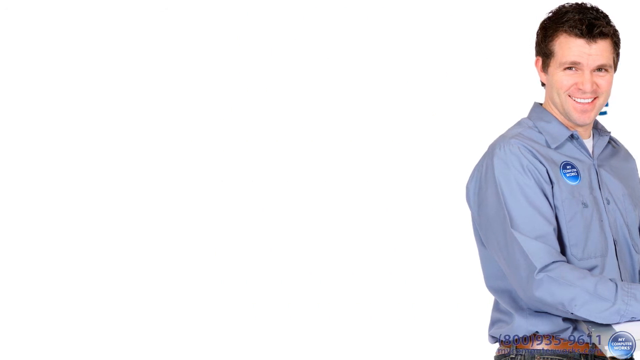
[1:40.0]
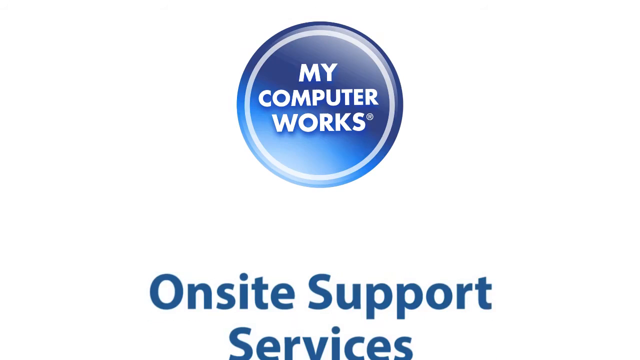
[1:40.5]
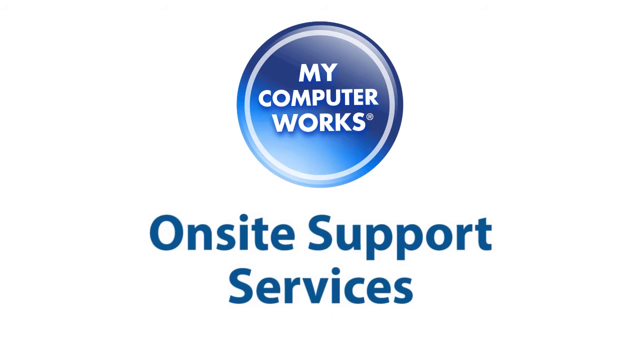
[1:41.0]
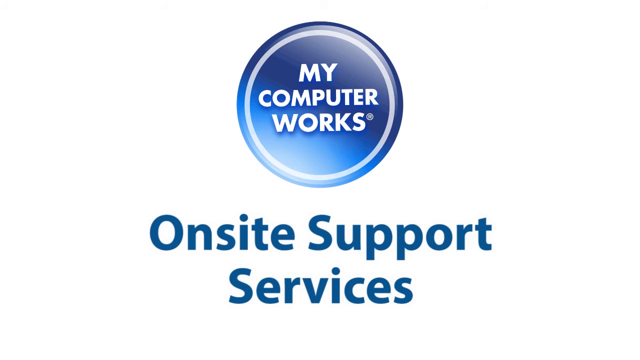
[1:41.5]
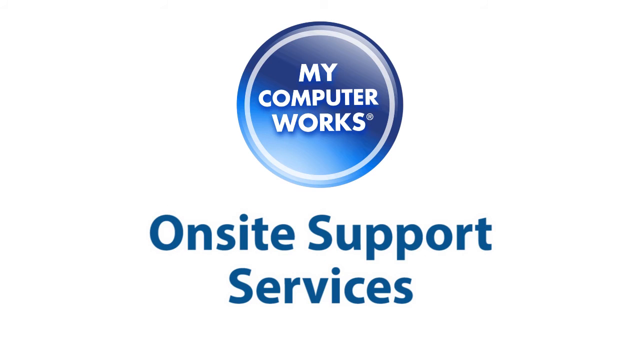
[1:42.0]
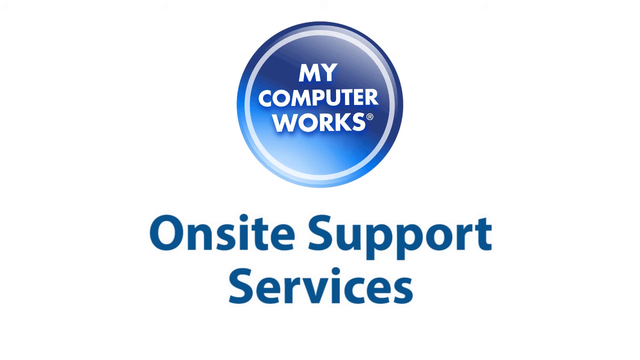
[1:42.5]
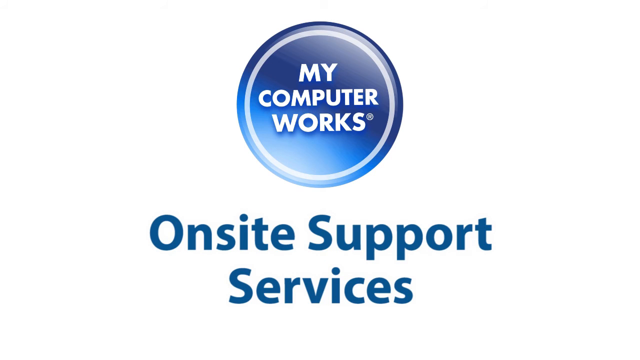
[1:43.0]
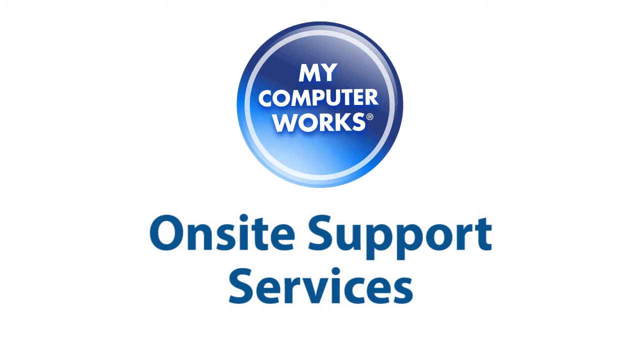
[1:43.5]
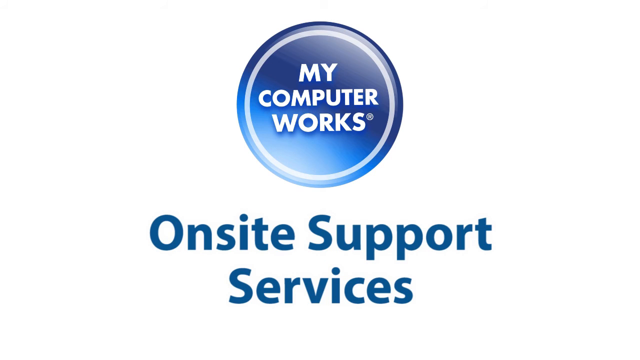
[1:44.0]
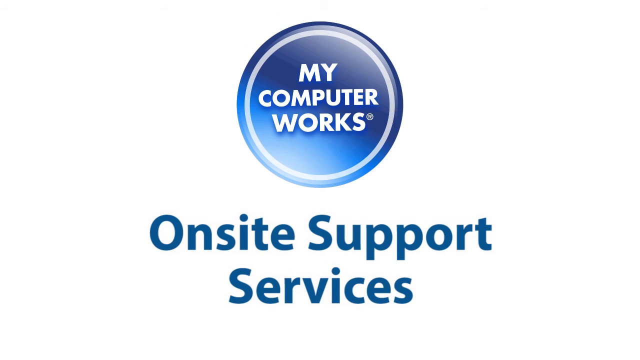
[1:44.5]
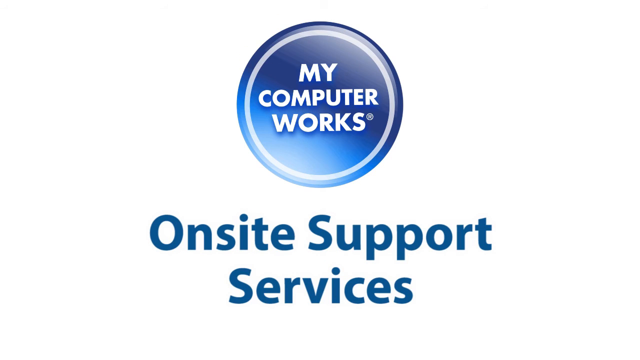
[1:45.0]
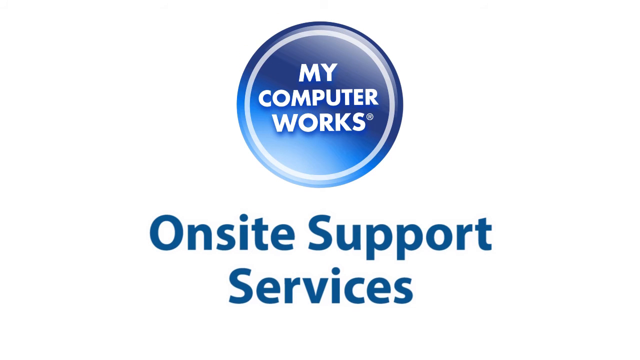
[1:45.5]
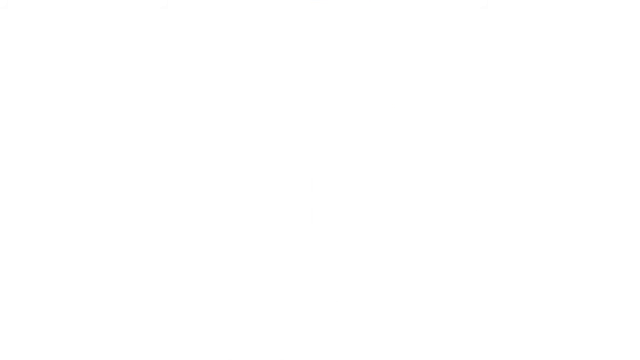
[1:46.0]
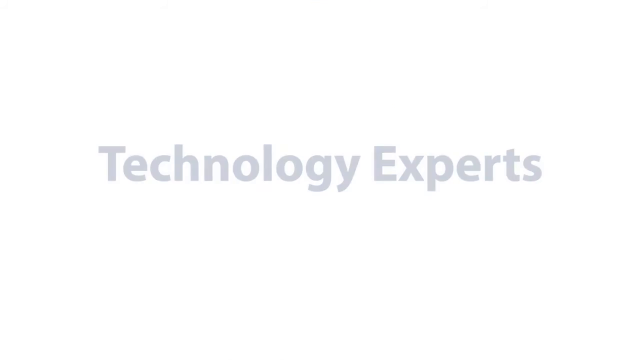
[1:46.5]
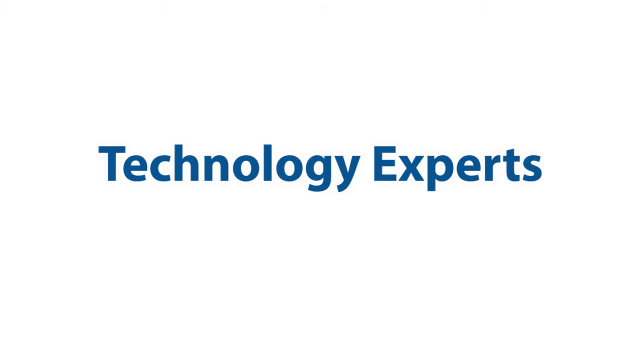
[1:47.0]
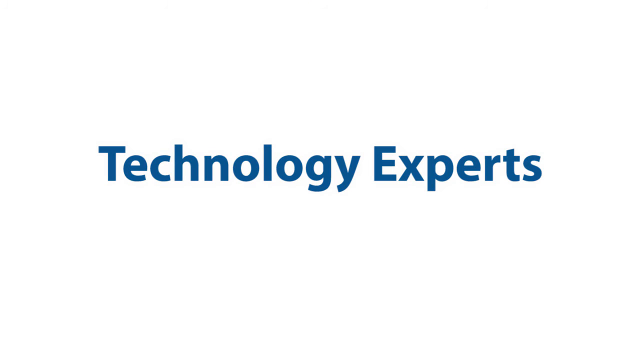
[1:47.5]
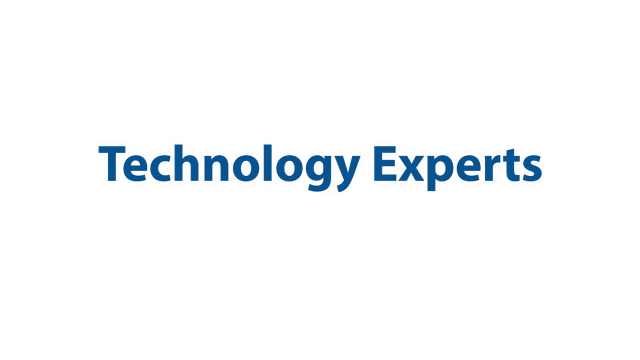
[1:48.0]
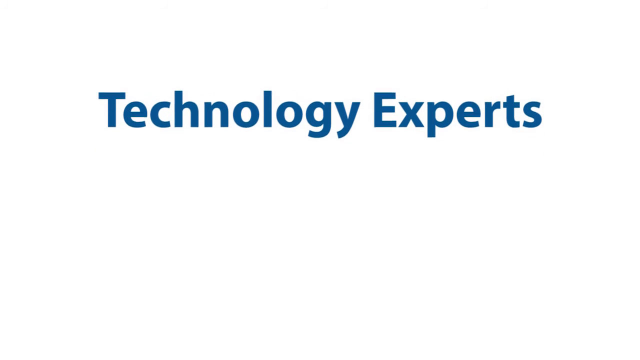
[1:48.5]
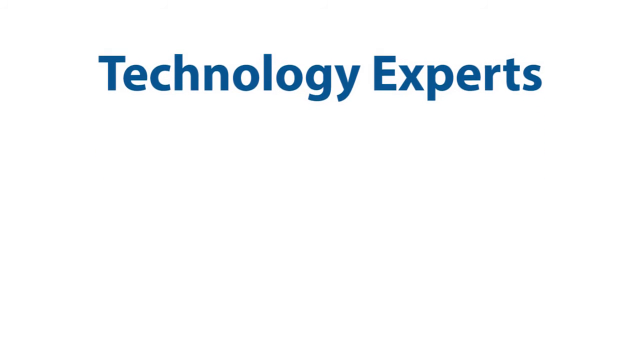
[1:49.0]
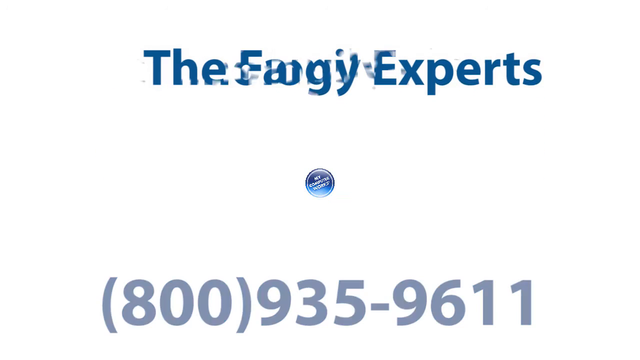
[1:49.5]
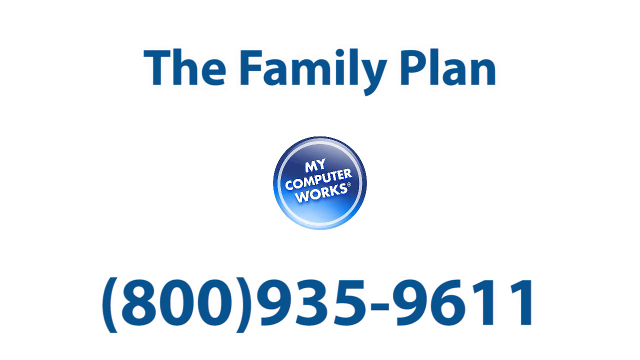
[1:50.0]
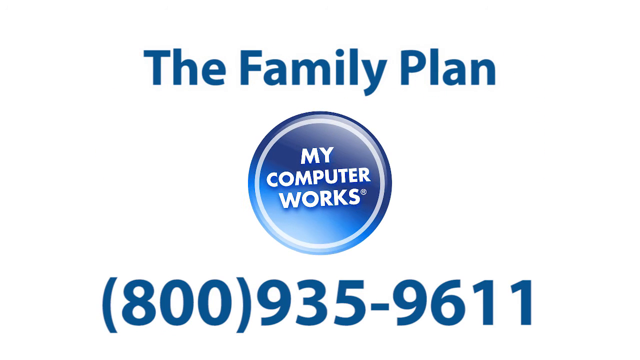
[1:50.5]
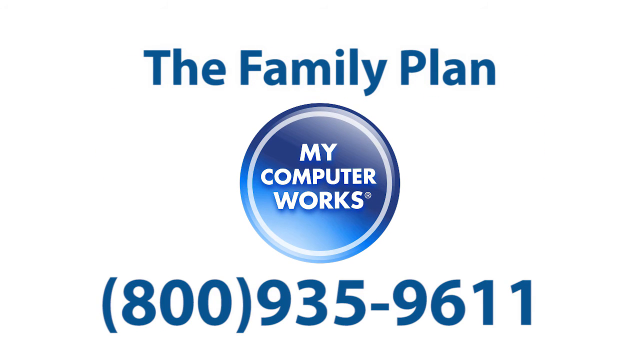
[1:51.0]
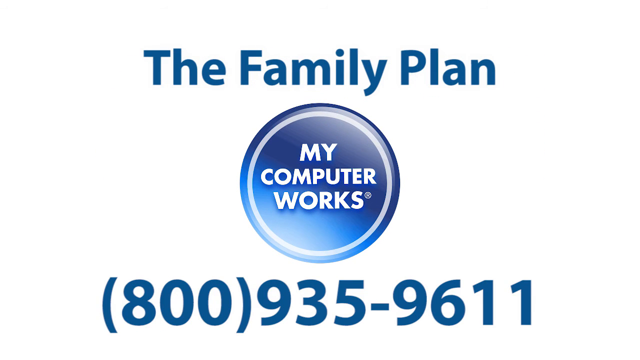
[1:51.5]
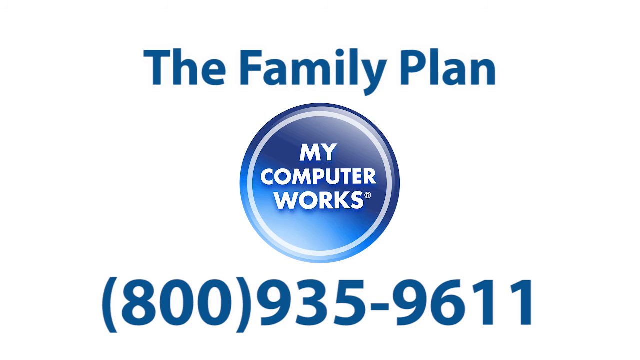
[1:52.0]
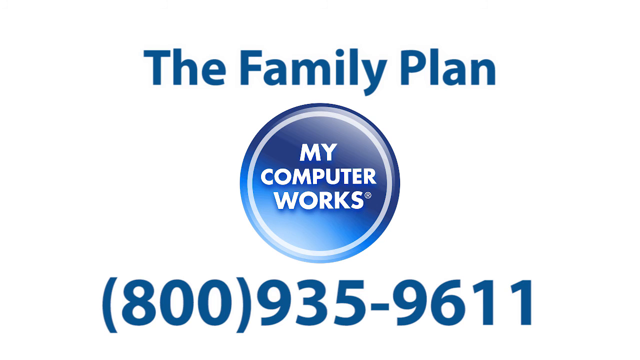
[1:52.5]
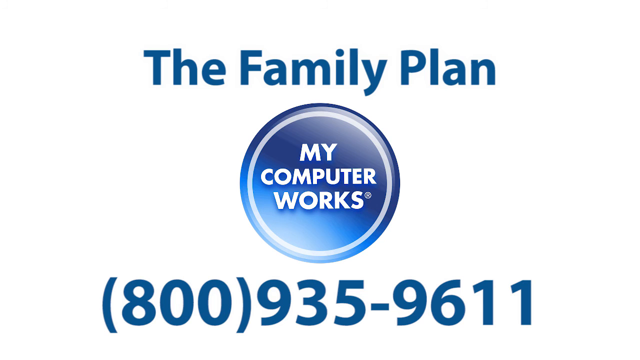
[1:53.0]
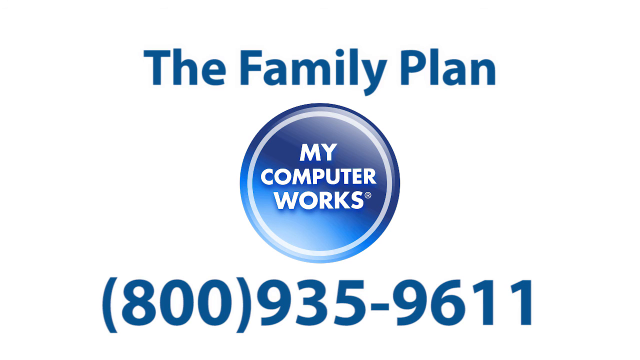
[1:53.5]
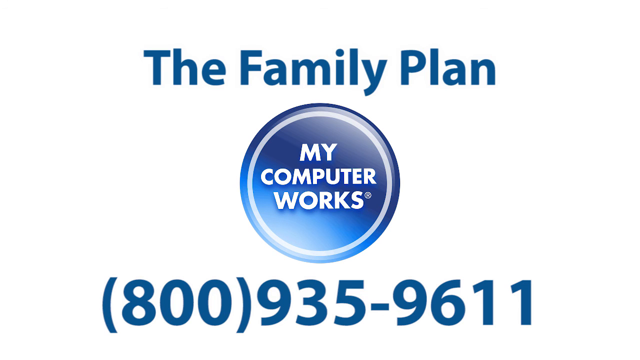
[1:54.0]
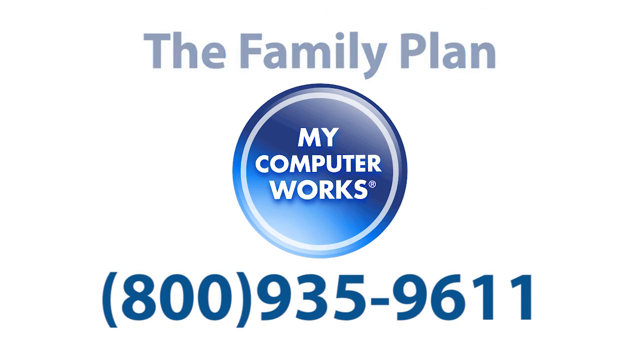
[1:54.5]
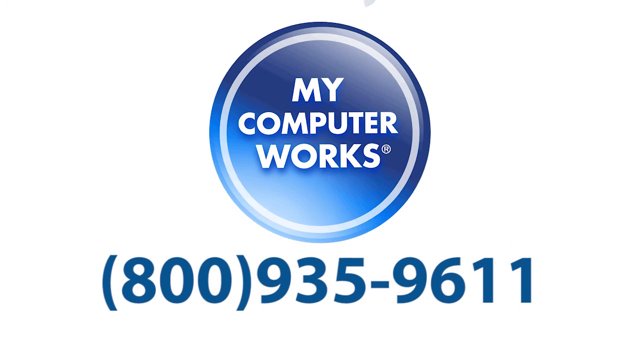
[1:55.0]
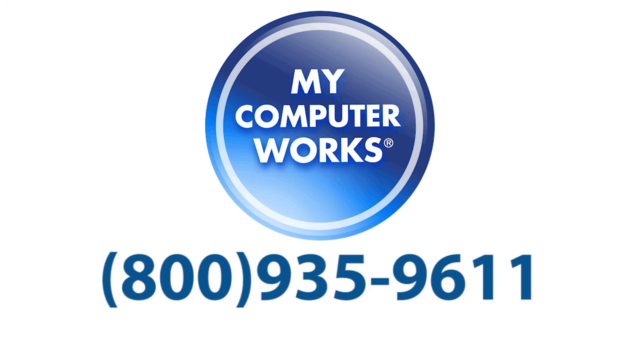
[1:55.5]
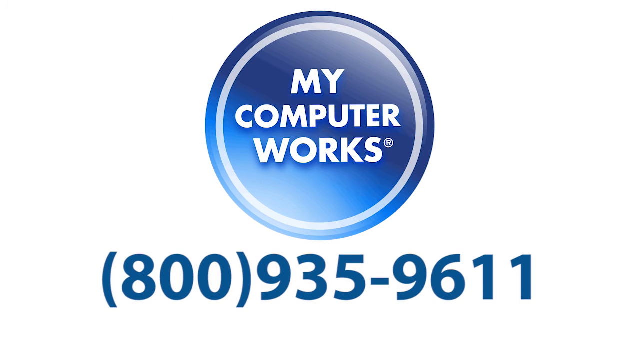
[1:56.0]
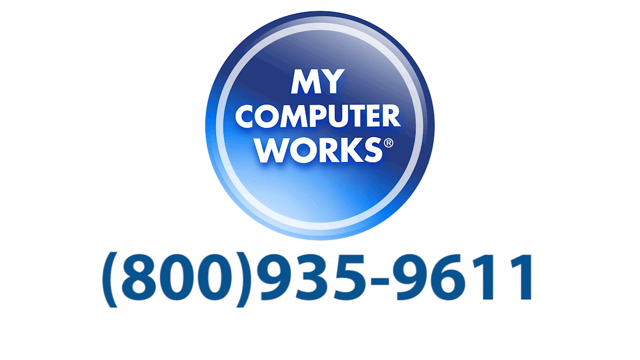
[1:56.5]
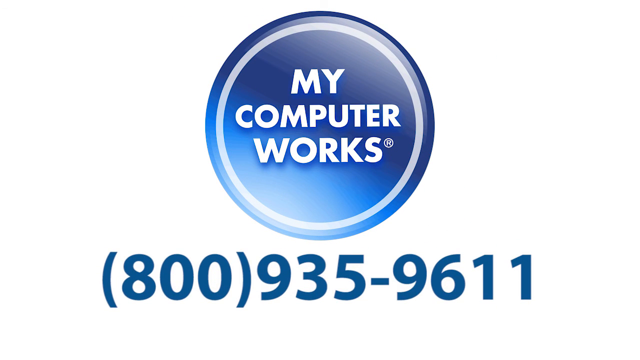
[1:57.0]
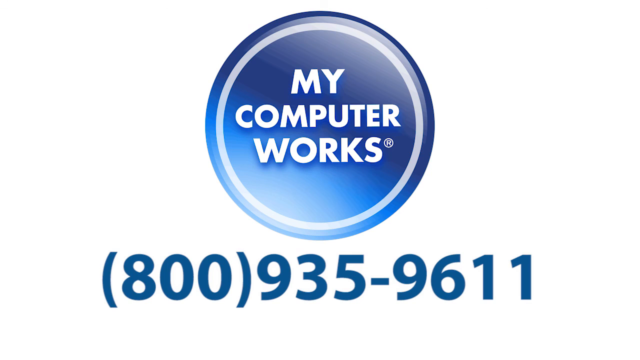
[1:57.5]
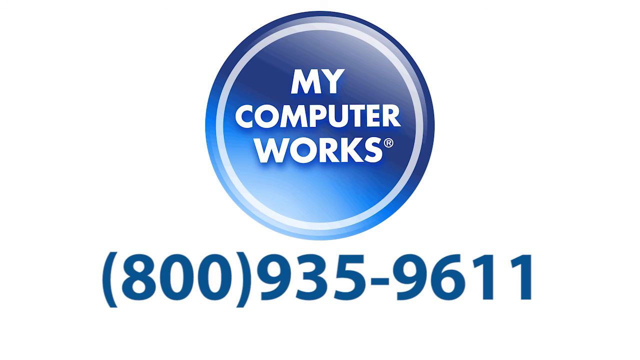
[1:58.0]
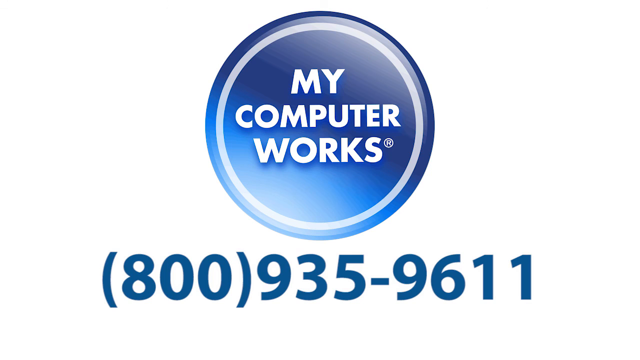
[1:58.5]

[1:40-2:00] As the man disappears off to the right of the screen, the circular blue My Computer Works logo fades in at the top middle of the screen. Blue text rises up from the bottom, becoming less transparent, and says "On-site support services". The logo and the text then disappear off the screen in opposite directions, the circle moving up off the top and the text moving down off the bottom. Blue text fades into the middle of the screen saying "Technology Experts". It moves up to the top of the screen and morphs in a graphic dissolve to say "The Family Plan", while the blue My Computer Works circle starts to grow in the middle of the screen and blue text appears along the bottom giving a telephone number, (800) 935 9611. The logo continues to grow and rotates right before coming to a halt in the middle of the screen. The "The Family Plan" text at the top becomes transparent and moves up out of the top of the screen as the circle grows larger to fill that space. The video then cuts to a white screen.